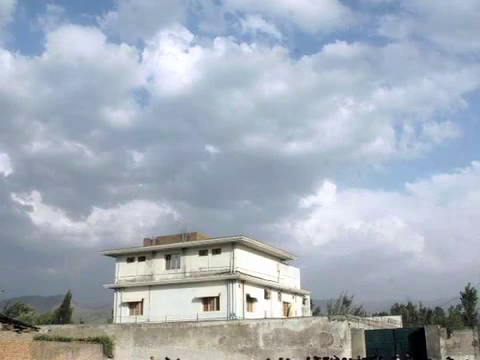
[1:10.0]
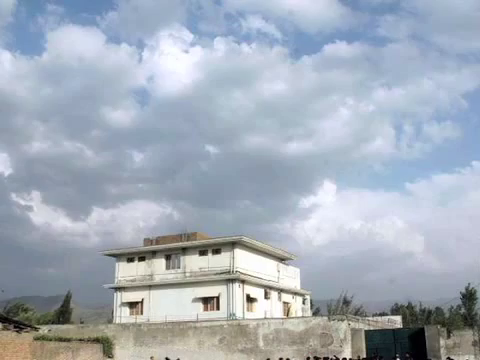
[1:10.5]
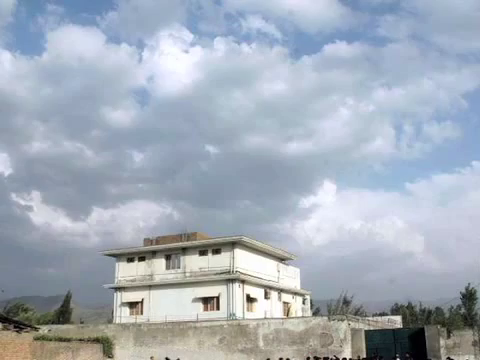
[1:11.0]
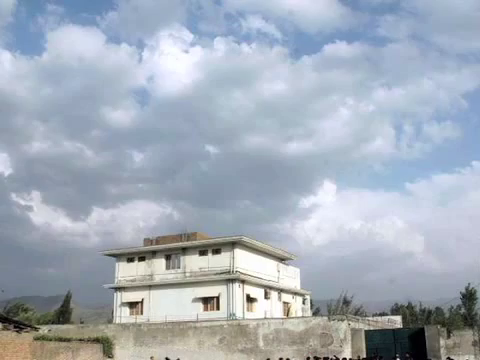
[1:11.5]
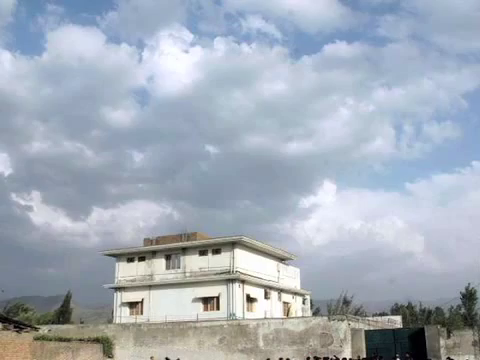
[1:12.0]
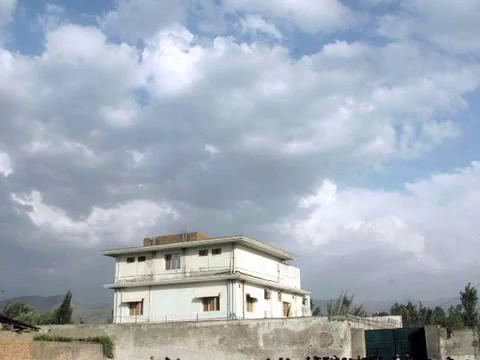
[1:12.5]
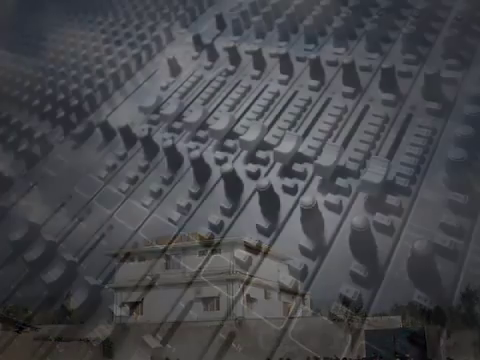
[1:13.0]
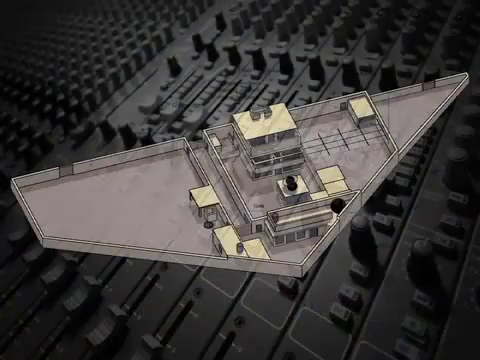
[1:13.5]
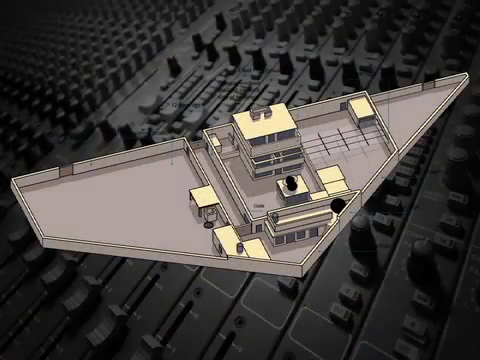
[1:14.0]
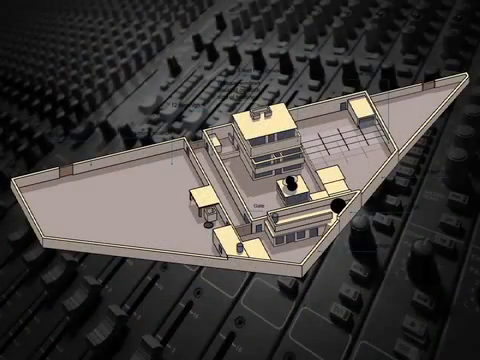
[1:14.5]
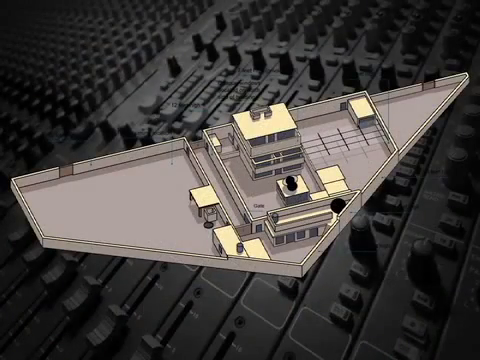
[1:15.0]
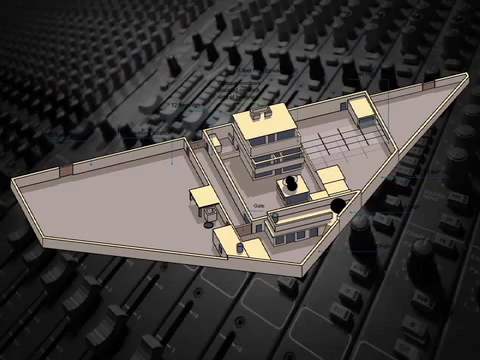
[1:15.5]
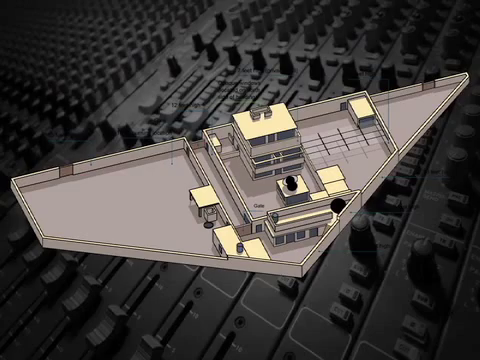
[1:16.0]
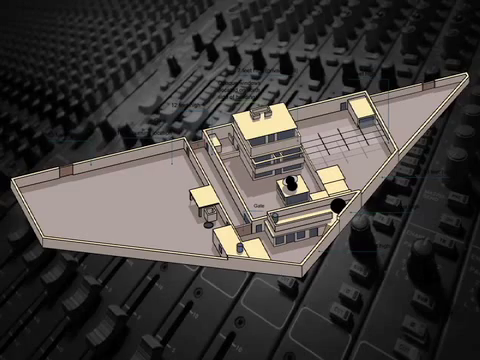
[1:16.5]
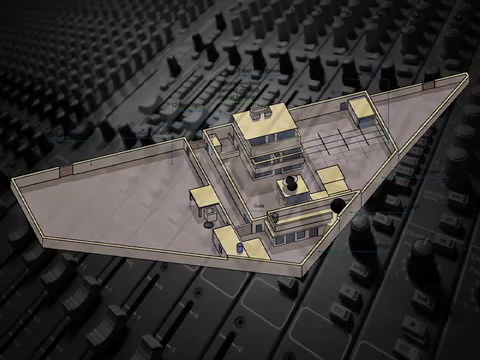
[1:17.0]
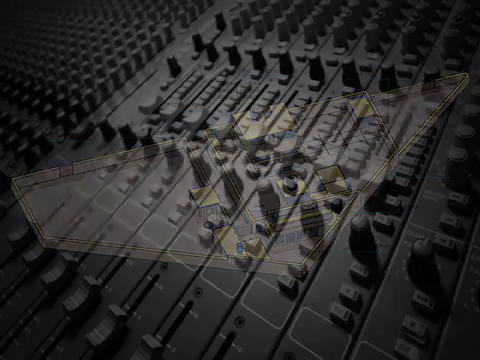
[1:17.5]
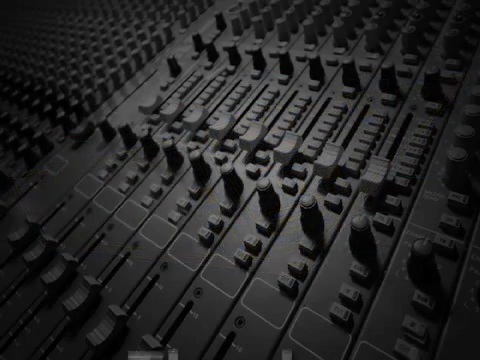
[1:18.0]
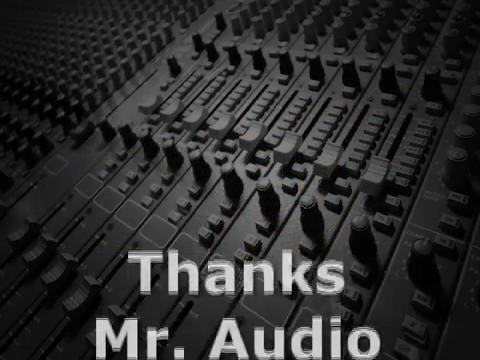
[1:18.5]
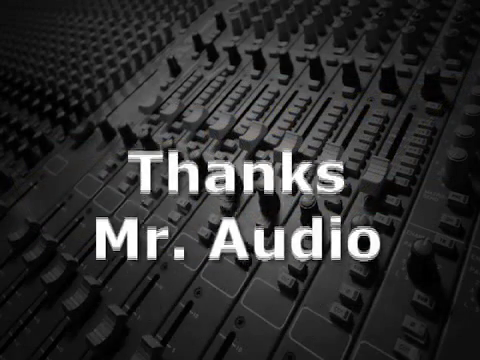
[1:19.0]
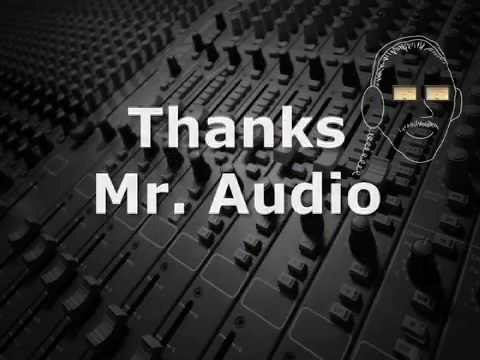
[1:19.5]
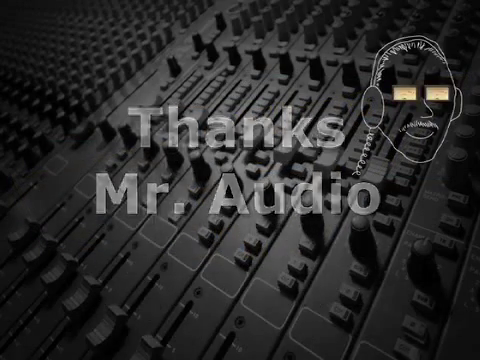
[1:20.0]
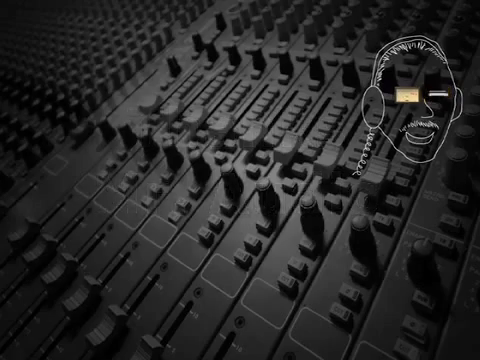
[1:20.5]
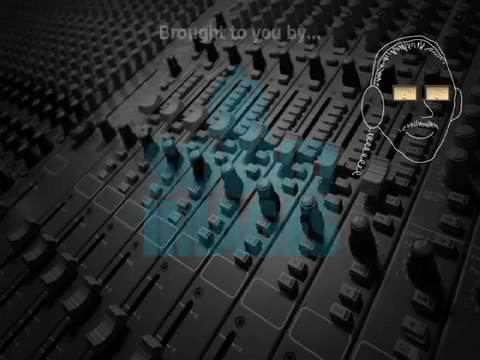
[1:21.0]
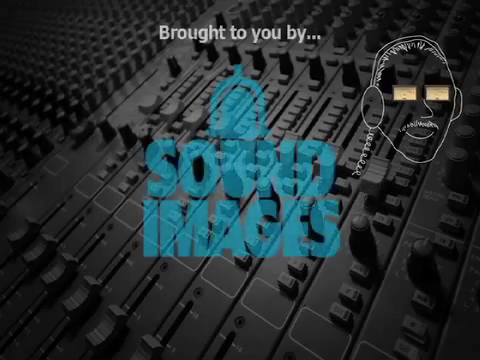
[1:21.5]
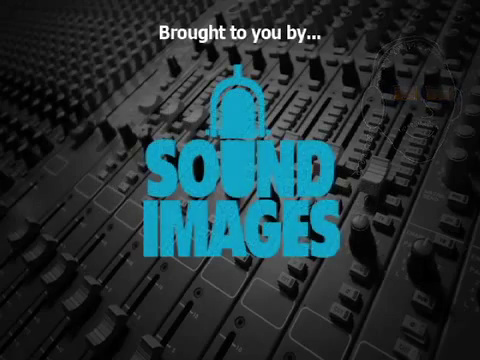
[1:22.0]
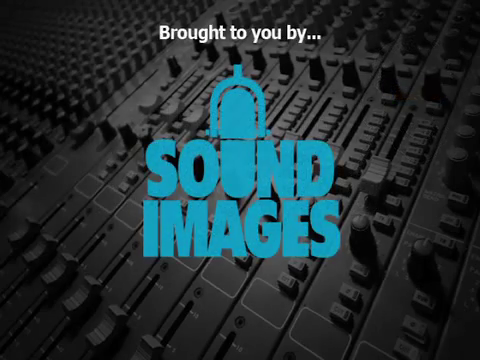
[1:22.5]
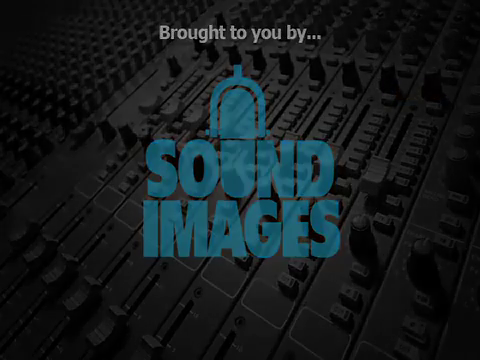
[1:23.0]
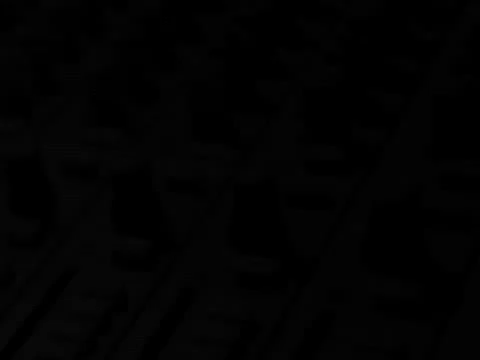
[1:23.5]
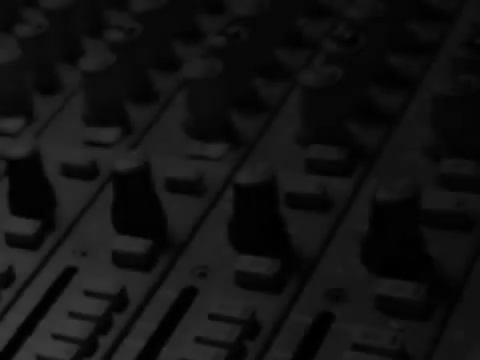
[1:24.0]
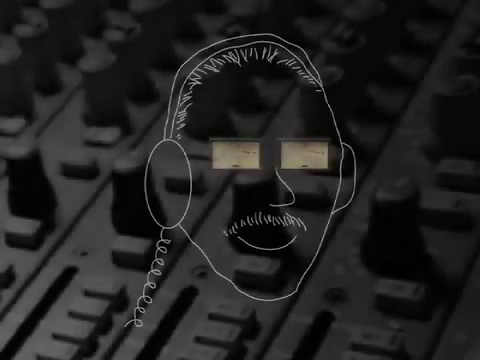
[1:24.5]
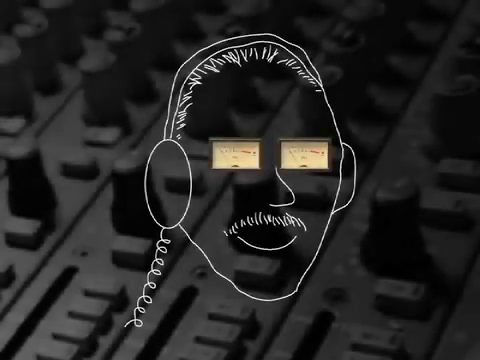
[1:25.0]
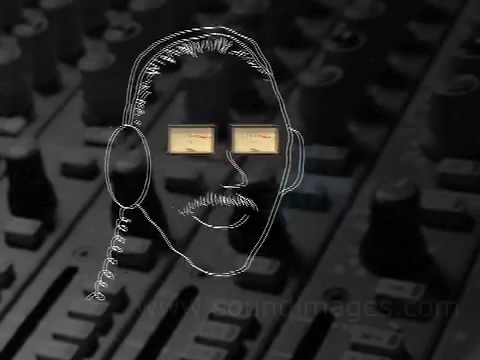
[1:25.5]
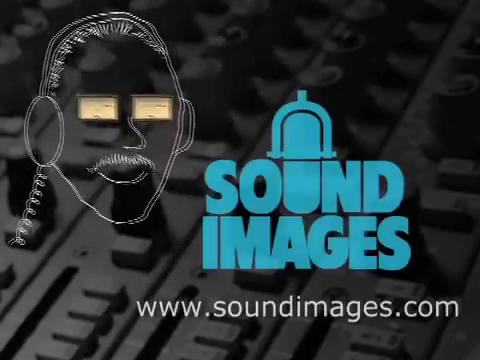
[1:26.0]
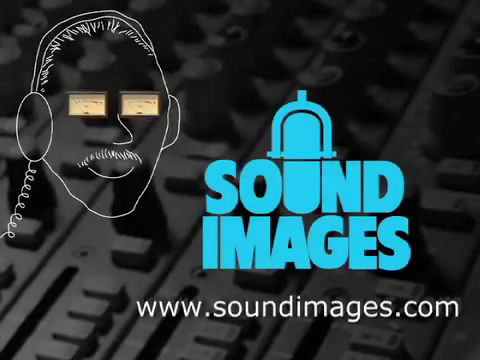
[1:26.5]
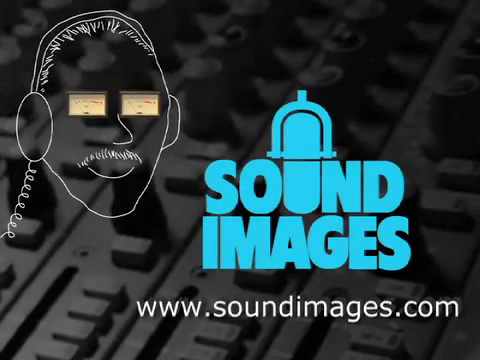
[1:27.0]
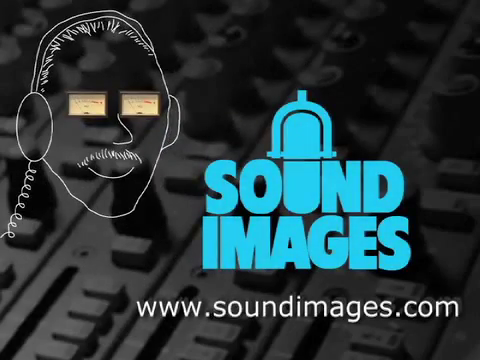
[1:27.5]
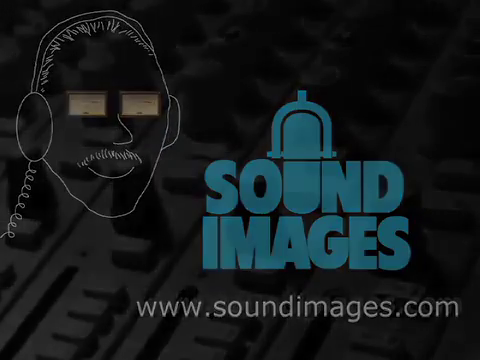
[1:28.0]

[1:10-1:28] White bold text asks whether anyone knows what a laser microphone is. A design drawn on a white sheet shows how the laser was designed, along with the photocell and particles that make up the laser microphone. Red lasers are shown, made of plastic. A man in a 1947 photo appears to be interacting with a machine used to create music. Two people are shown aiming the laser at a far distance, with the source of the laser indicated, and a person points the laser through a window, which breaks.